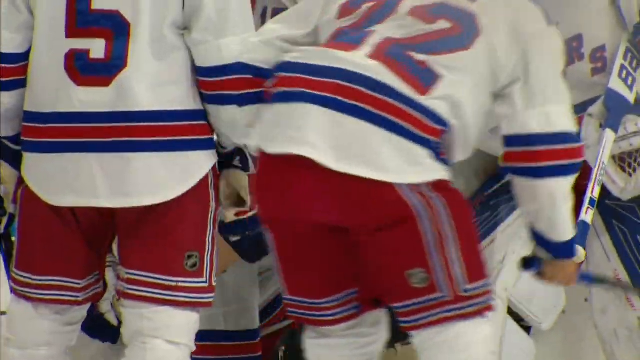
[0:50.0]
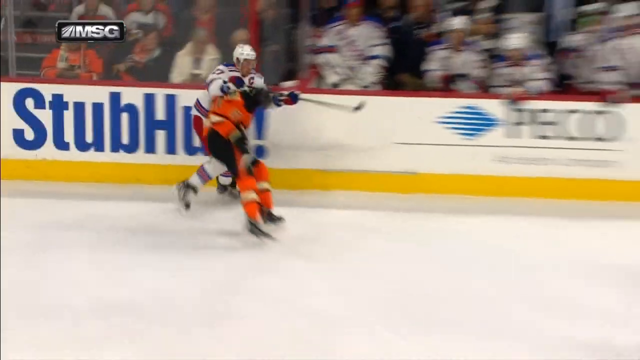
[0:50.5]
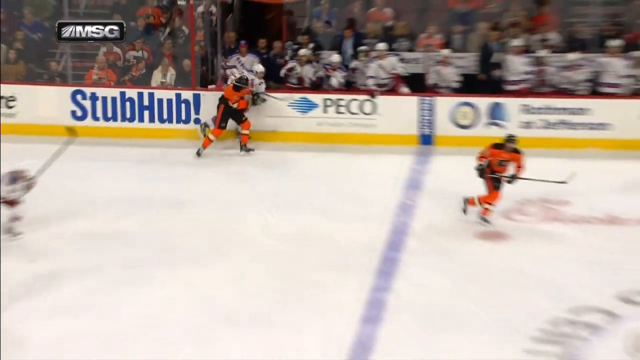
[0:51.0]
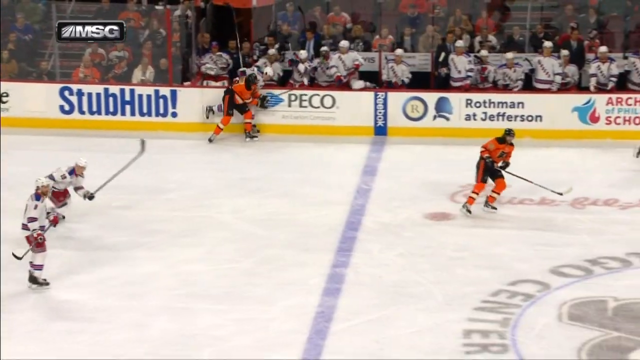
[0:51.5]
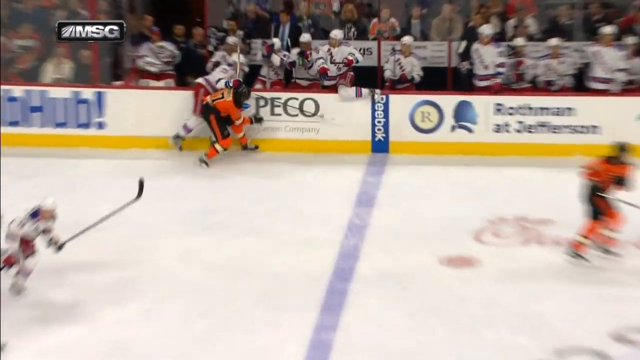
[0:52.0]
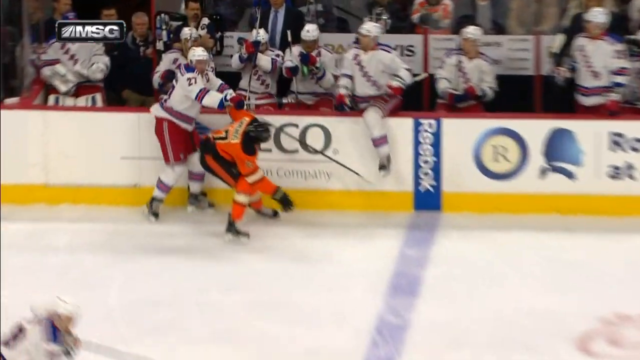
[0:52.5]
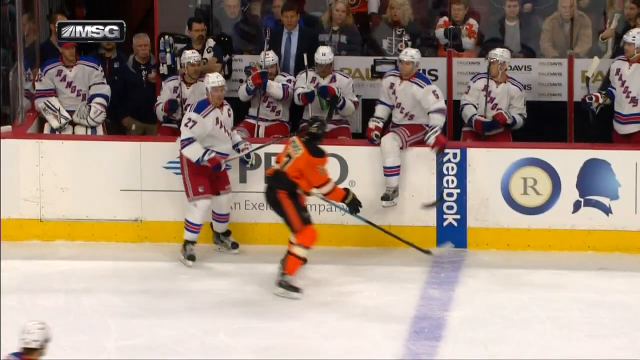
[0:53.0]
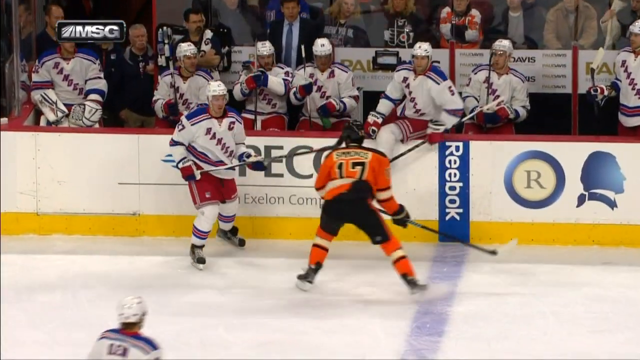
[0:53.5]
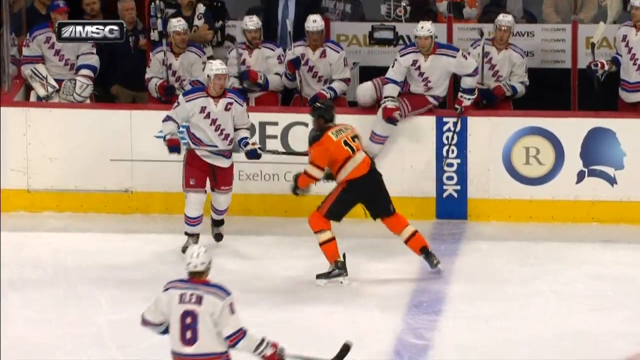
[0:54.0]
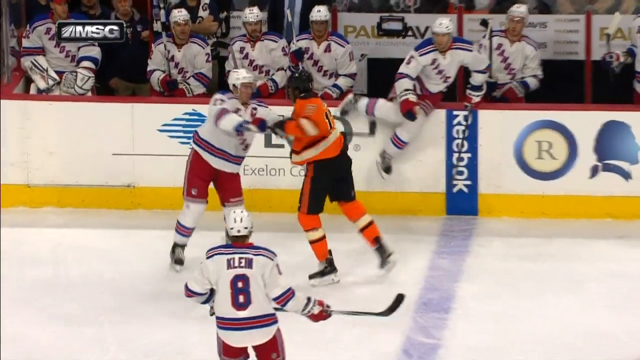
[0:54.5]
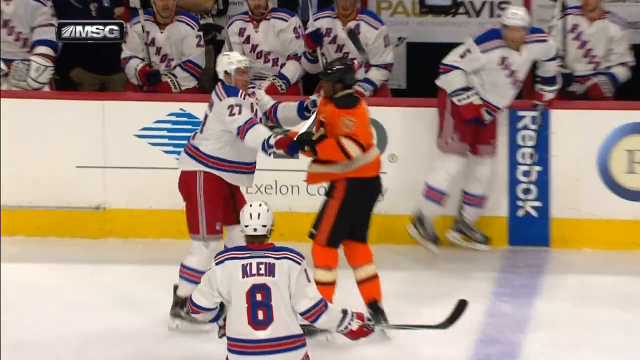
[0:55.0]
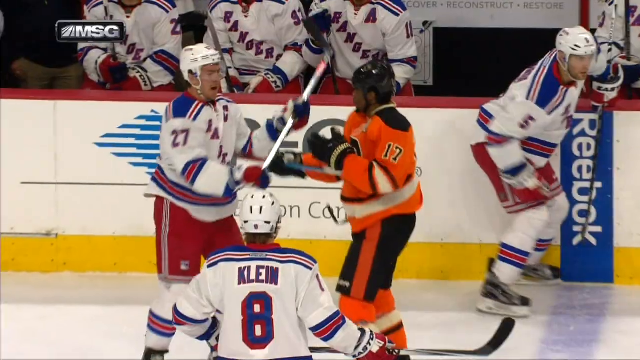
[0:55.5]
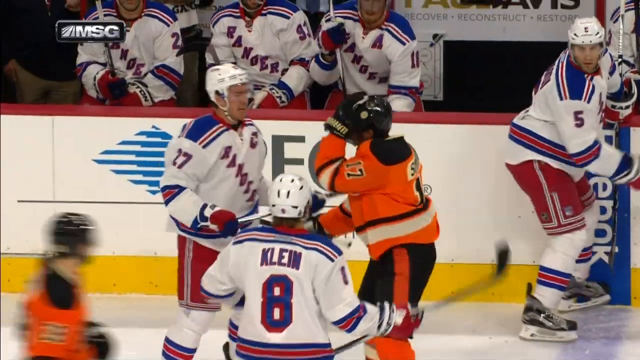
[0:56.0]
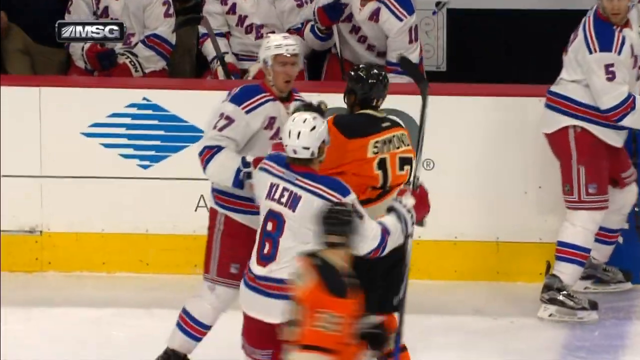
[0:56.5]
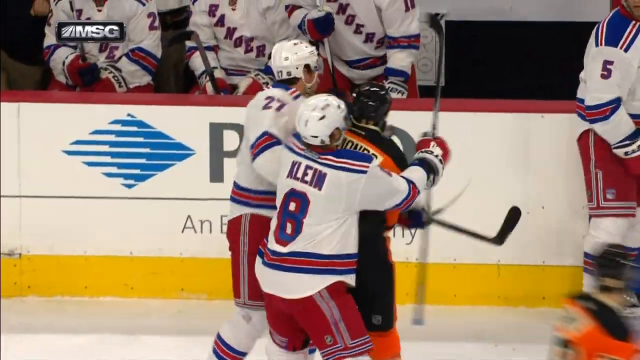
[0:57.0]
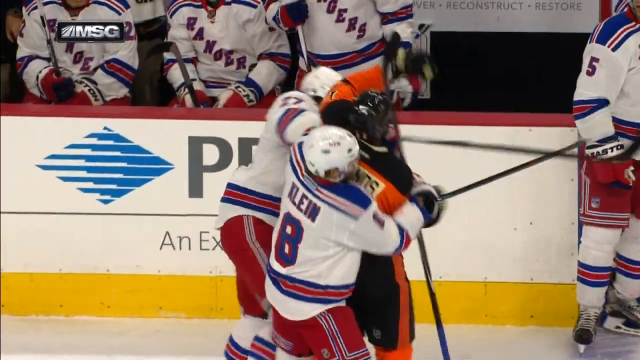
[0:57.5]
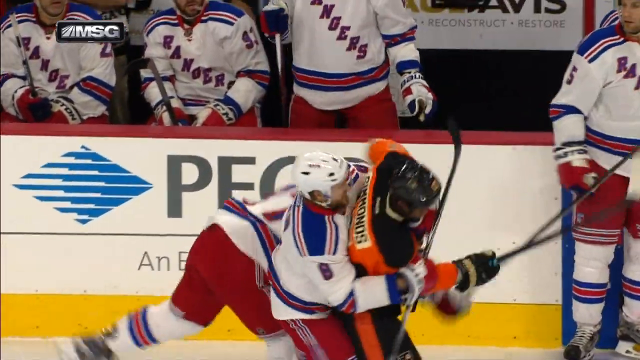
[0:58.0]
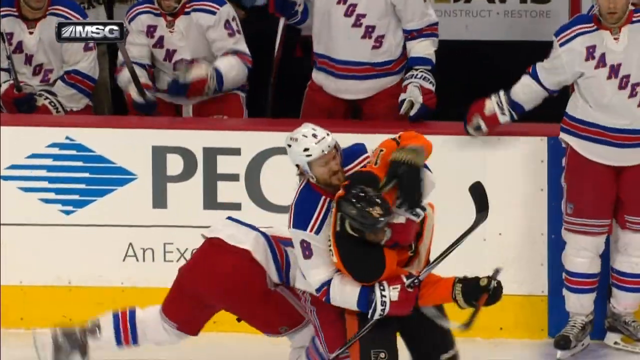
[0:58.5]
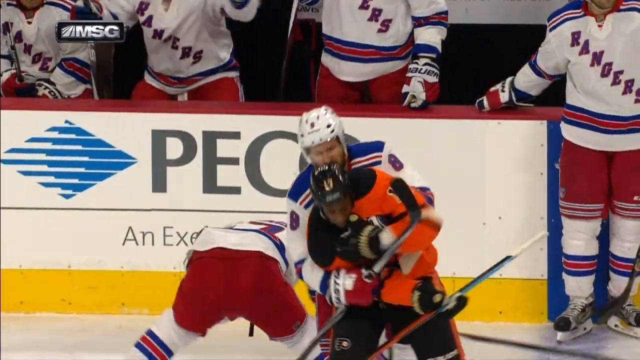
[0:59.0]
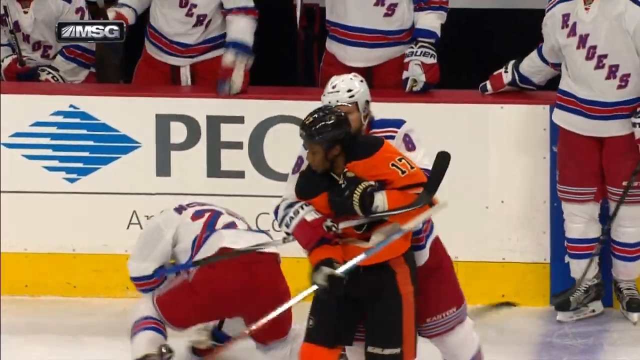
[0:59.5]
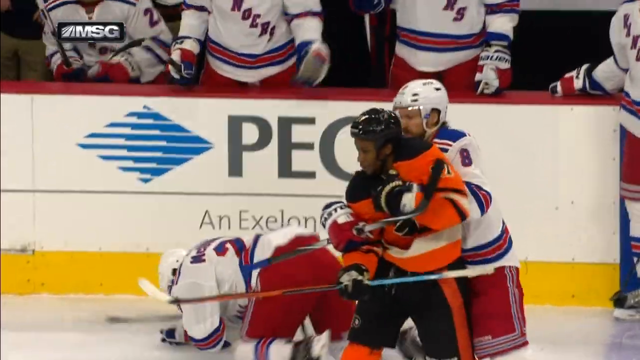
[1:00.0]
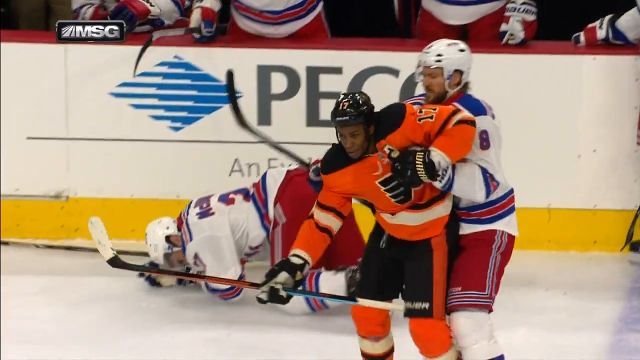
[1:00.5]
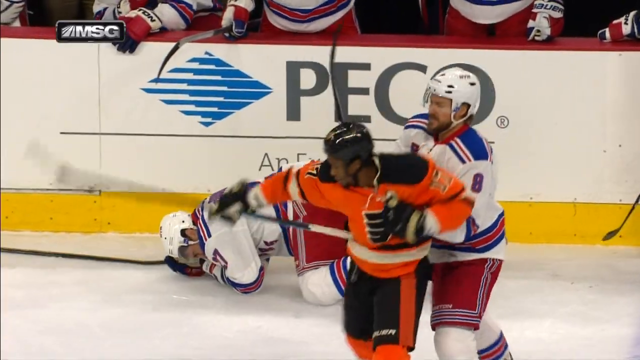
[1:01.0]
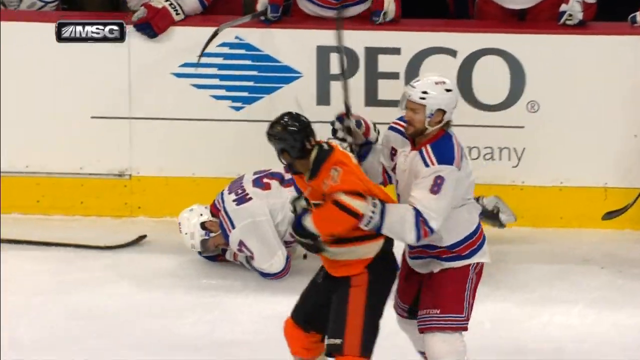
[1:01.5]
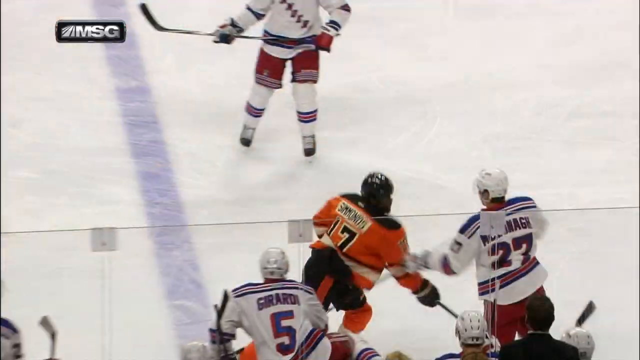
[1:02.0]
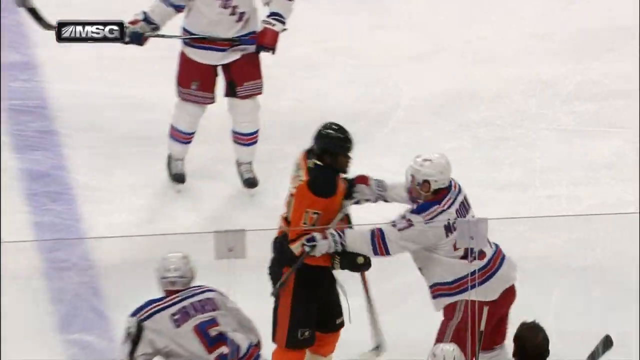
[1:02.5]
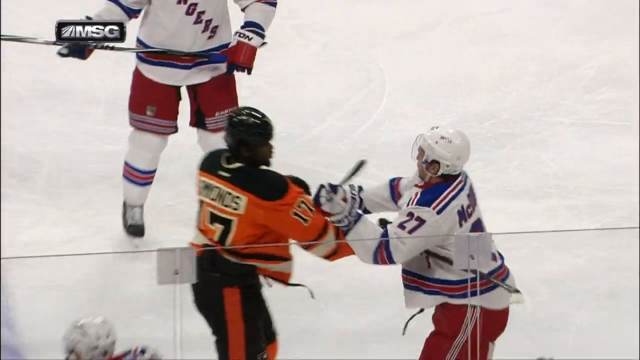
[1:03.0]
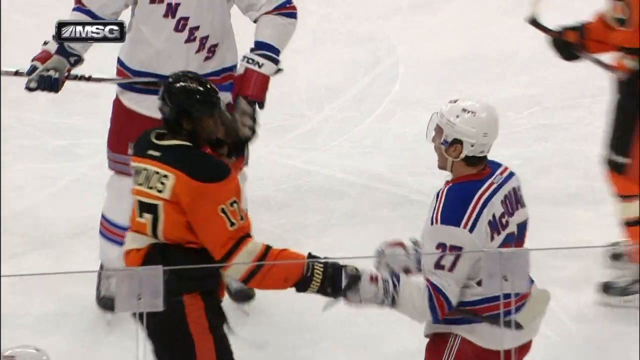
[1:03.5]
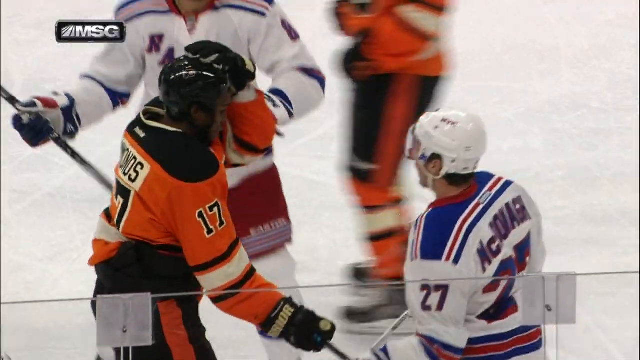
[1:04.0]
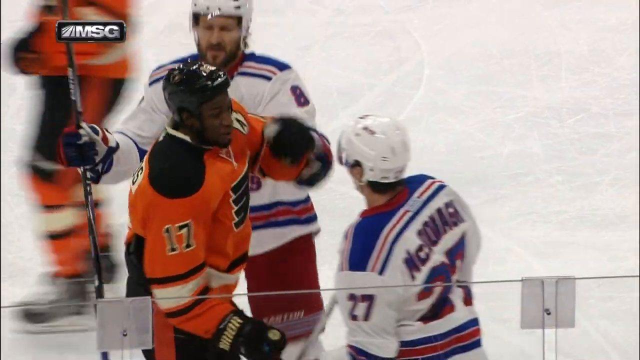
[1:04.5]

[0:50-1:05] The title apparently reads Gotta See It, Simmond Ejected for Interfering. The exchange on the ice is now shown: Simmond and a player from the other team are in a pushing match, and Simmond checks him into the side of the rink, then punches him in the face. A teammate of the player grabs Simmond. From another angle, Simmond elbows the opponent in the face, which apparently stuns him. They exchange words, and the other team member grabs Simmond and pushes him away. More players from the hurt player's team go over the barrier to try to get at Simmond, and there is chaos as people and the referees try to break up the fight.